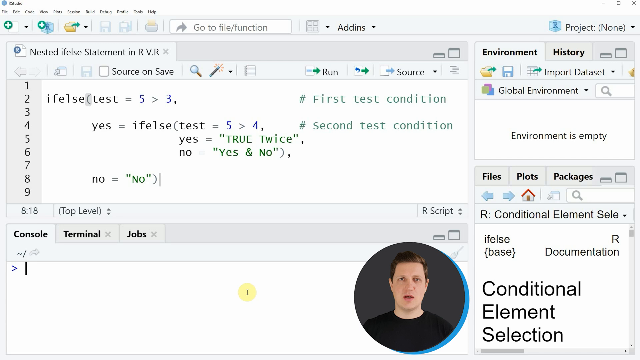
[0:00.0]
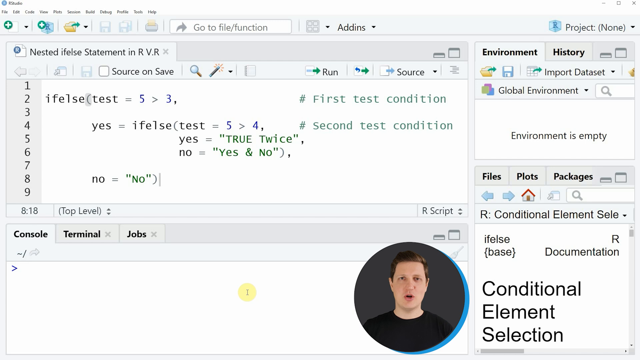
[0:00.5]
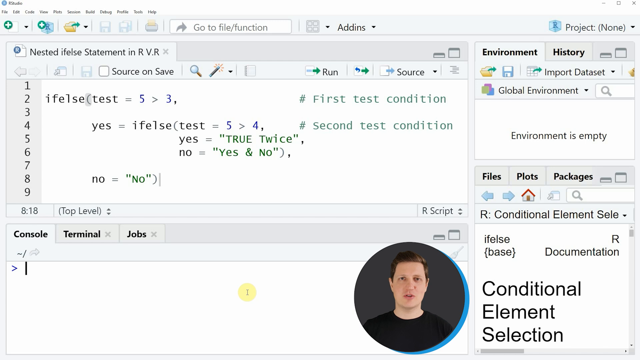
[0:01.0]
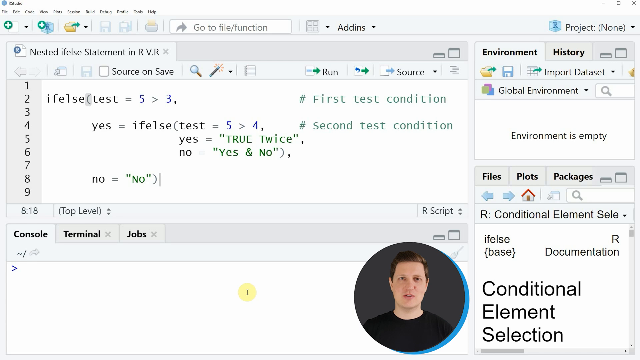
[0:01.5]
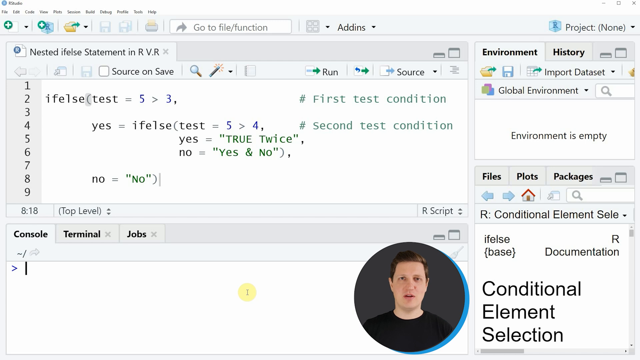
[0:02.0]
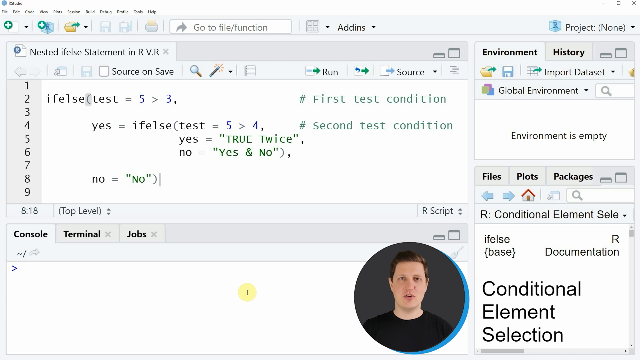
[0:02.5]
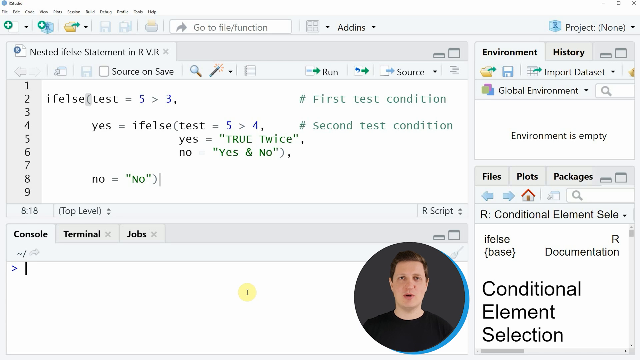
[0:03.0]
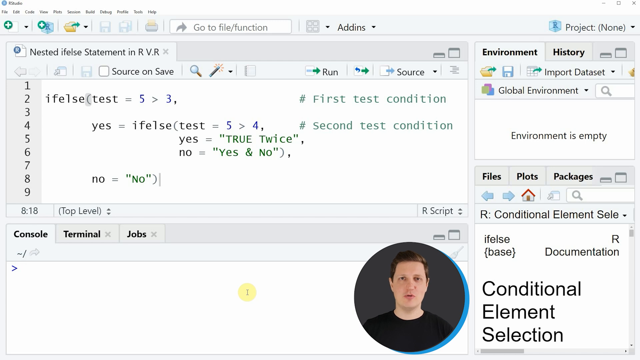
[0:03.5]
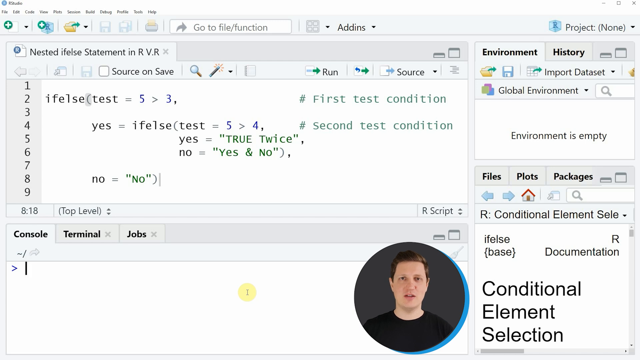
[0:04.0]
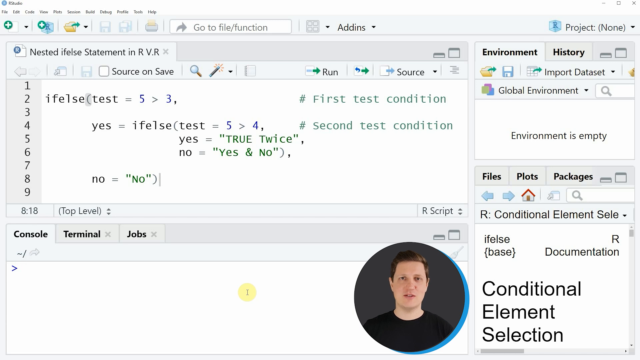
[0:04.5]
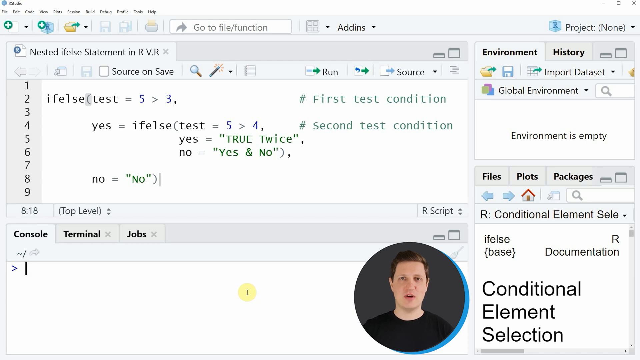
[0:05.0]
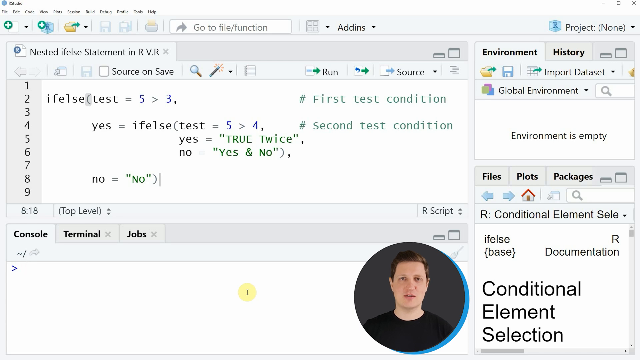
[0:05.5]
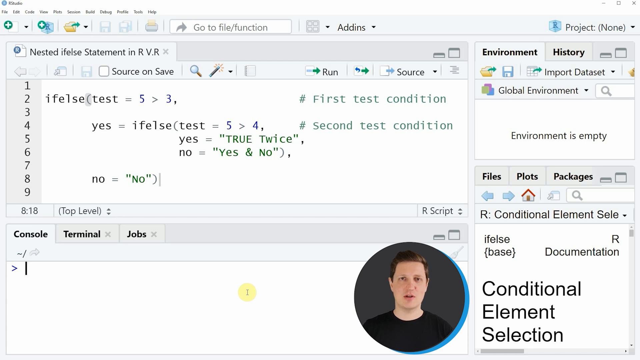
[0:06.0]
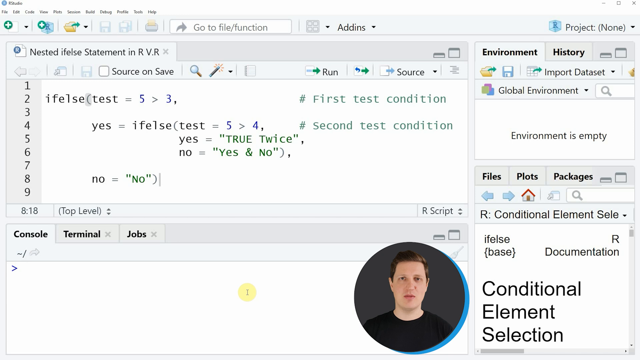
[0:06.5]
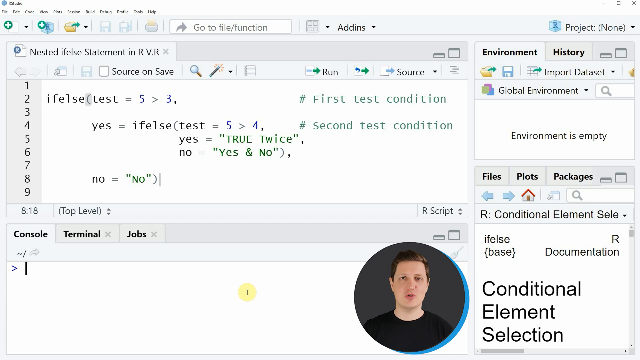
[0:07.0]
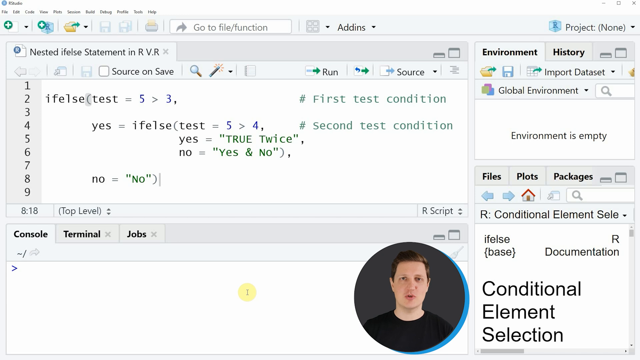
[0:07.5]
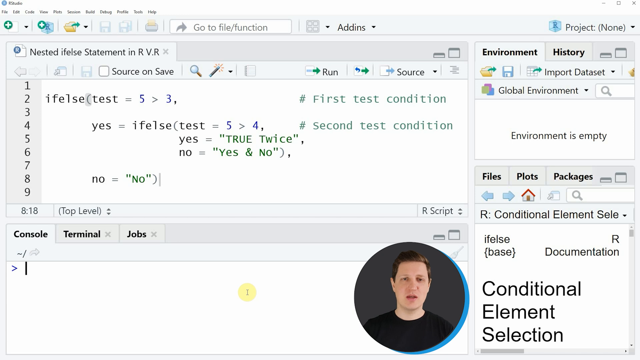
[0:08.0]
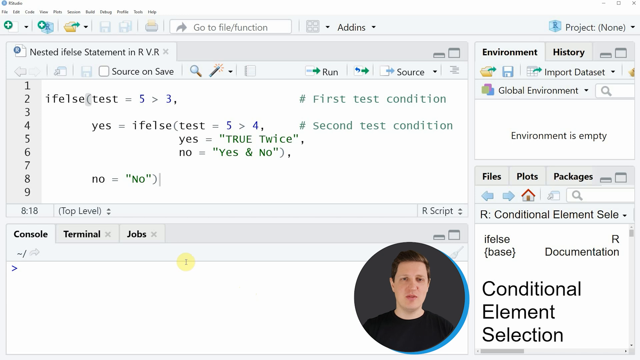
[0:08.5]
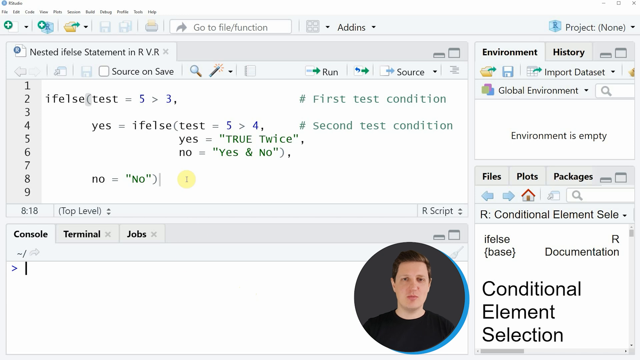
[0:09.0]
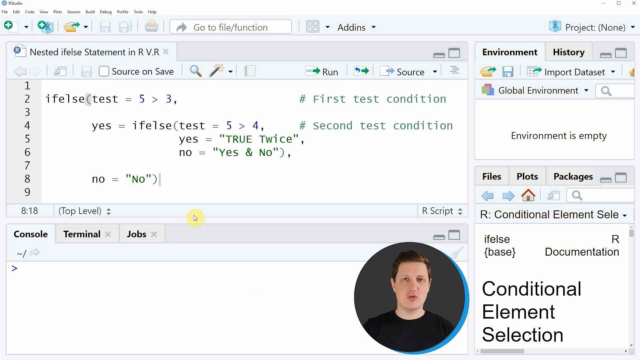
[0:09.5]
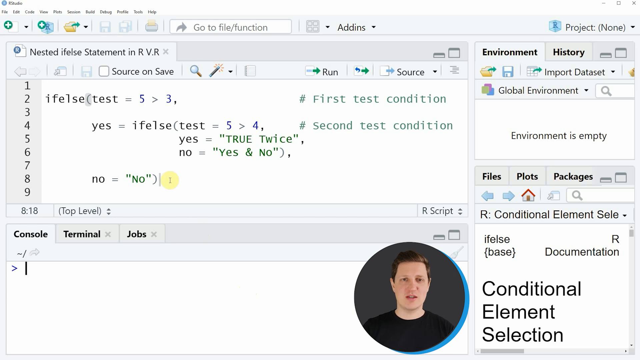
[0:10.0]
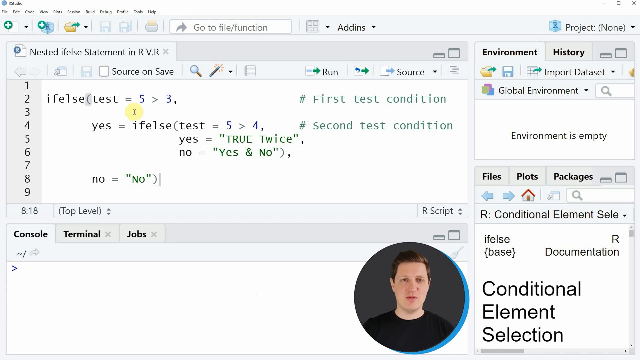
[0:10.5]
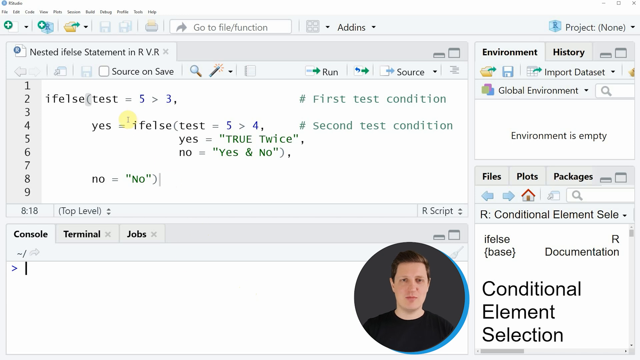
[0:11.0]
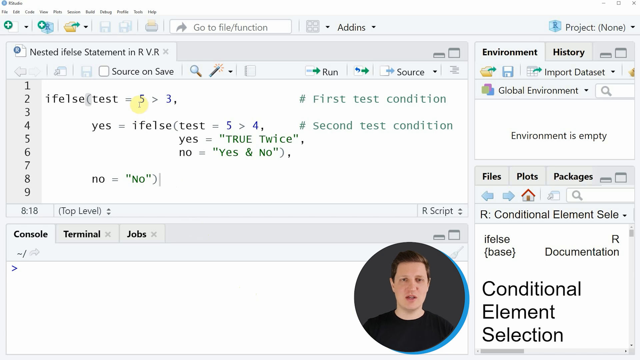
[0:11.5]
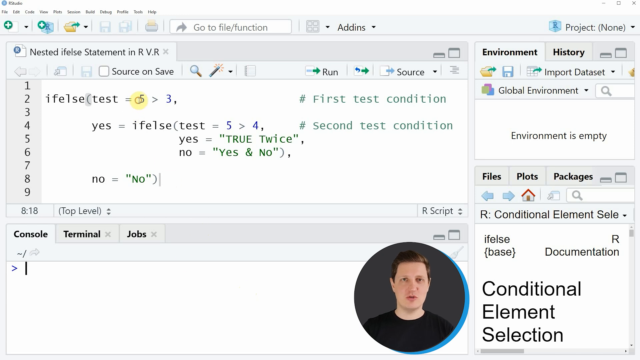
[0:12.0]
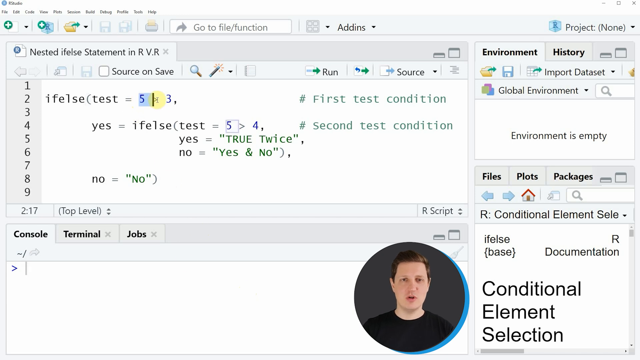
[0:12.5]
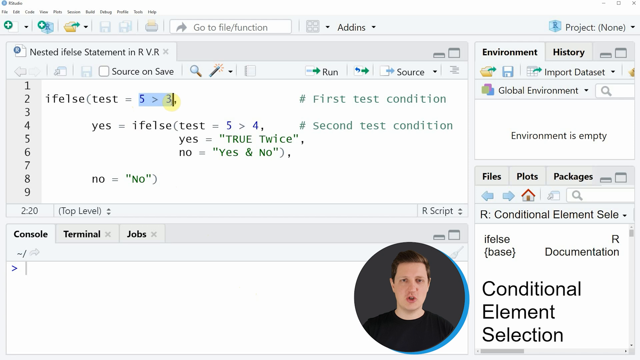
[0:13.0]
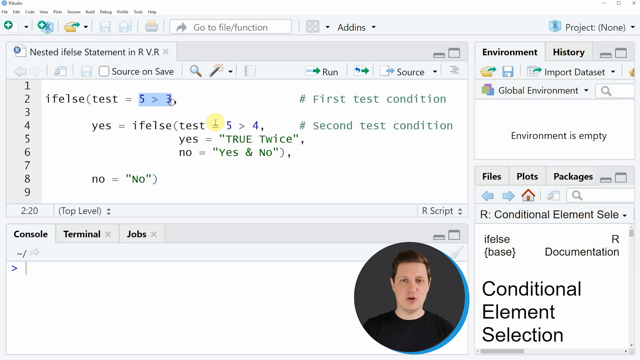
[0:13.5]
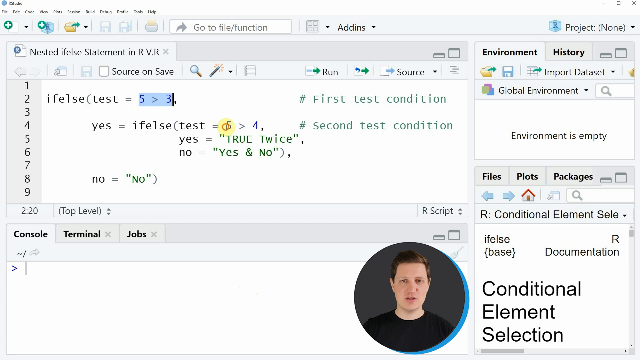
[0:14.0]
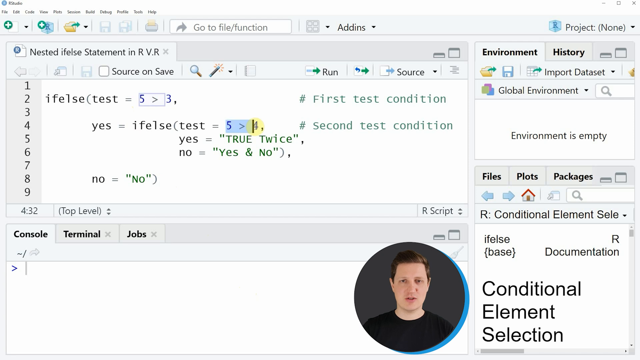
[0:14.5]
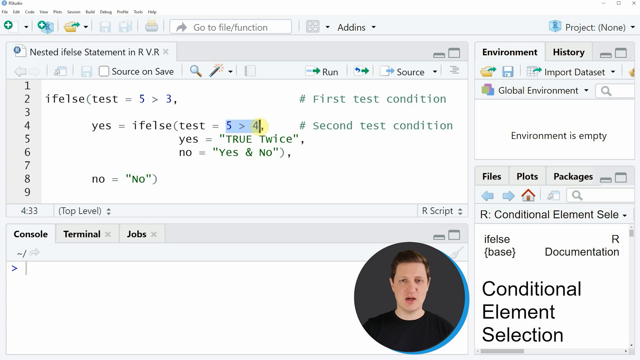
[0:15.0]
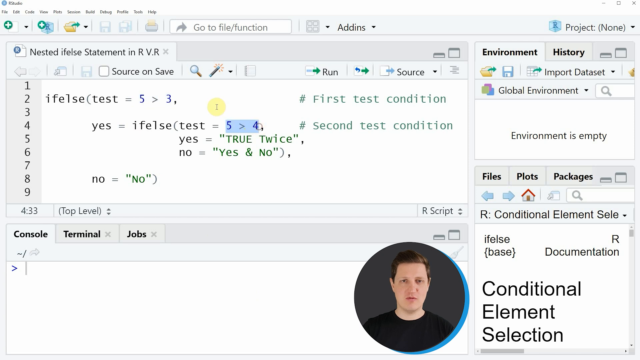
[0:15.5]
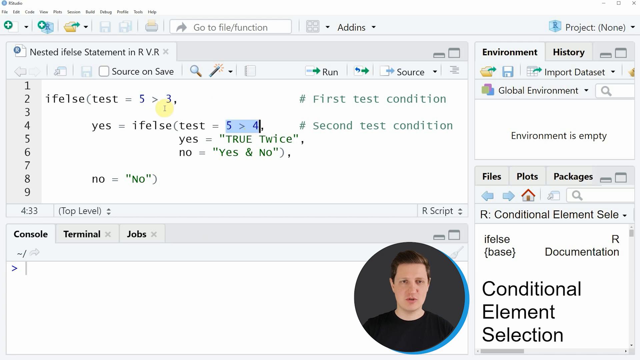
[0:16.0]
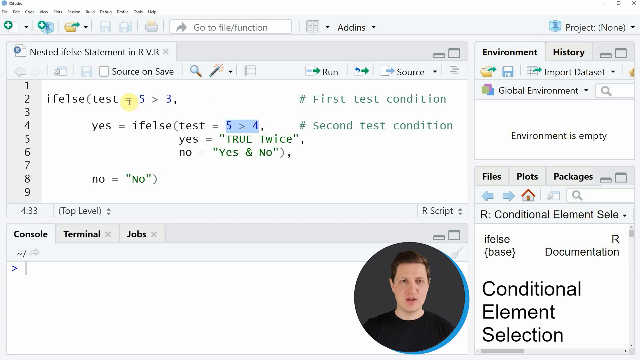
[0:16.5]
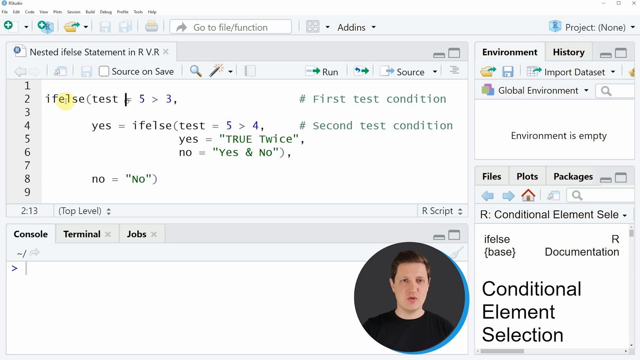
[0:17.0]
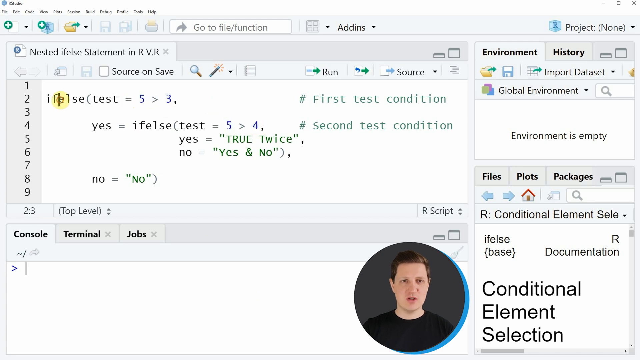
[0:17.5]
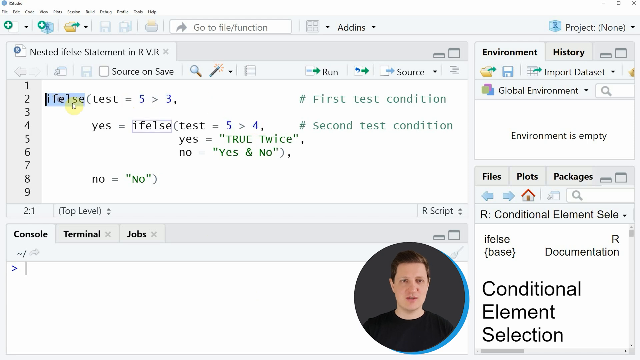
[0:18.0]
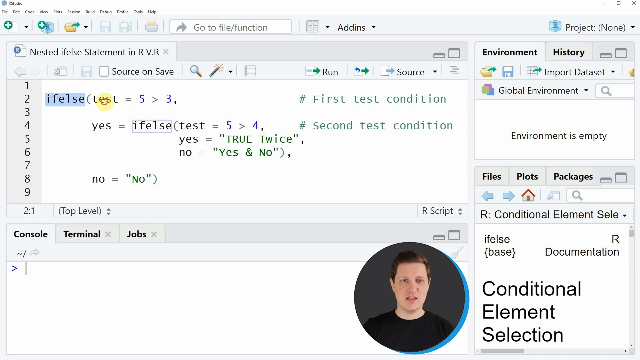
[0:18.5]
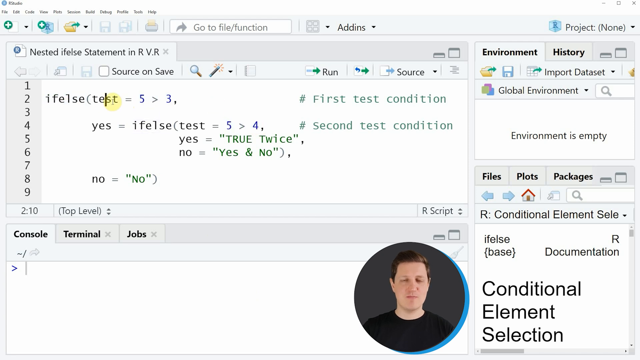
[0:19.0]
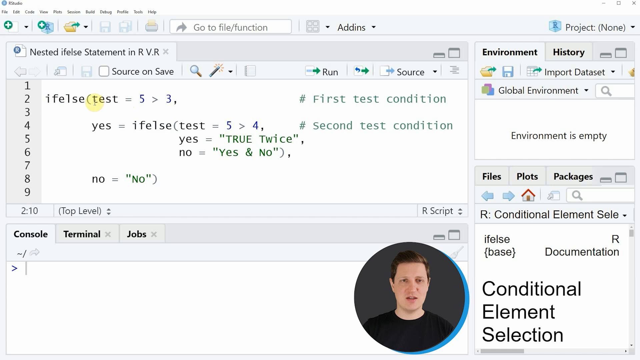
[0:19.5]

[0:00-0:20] A window with four panels is open. The top left panel contains written code, and the tab above it is titled "Nested, Ifelse Statement in R V.R". The panel underneath has three tabs that say "Console", "Terminal" and "Jobs". On the upper right is a small panel with two tabs, "Environment" and "History", and the bottom right panel says "Files", "Plots" and "Packages". Toward the bottom right of the screen, a circle frame shows a video of a man with light brown hair and a black shirt who speaks as he goes through the content on the page. He moves his mouse, which has a yellow circle highlighter, into the nested if-else statement panel. On line 2 he highlights the text "5 > 3", which gets a blue highlight. He then goes down to line 4 and highlights the text "5 >", which turns blue, and the text on line 2 is no longer highlighted. The cursor then highlights the "ifelse" text on line 2, followed by the "test" text inside the parentheses on the same line.